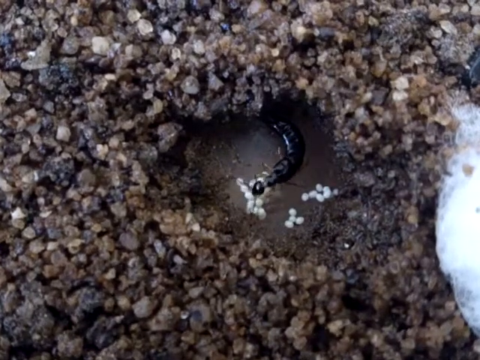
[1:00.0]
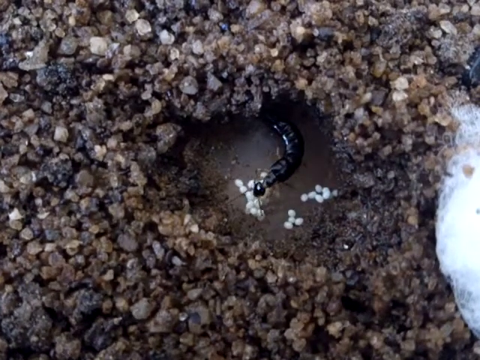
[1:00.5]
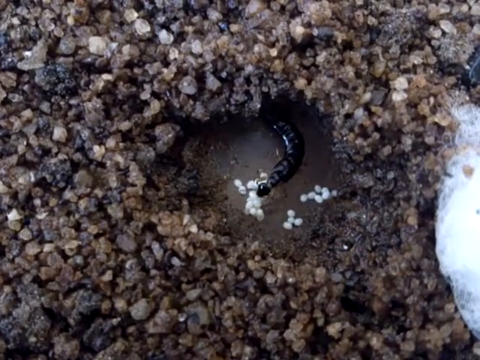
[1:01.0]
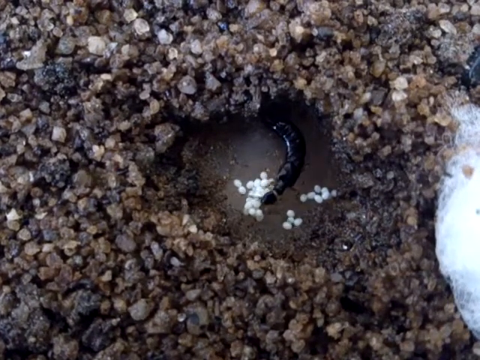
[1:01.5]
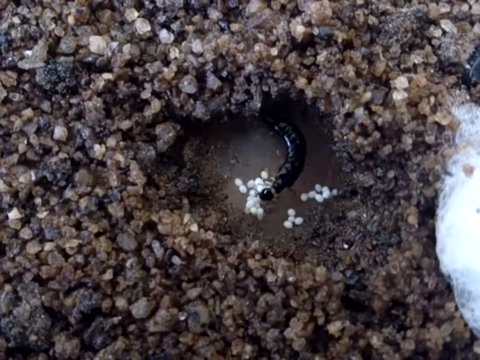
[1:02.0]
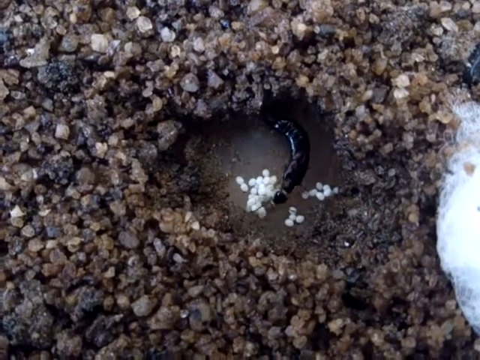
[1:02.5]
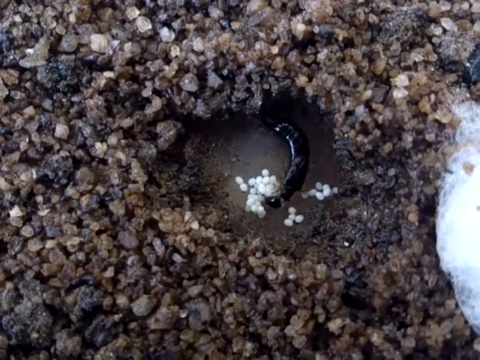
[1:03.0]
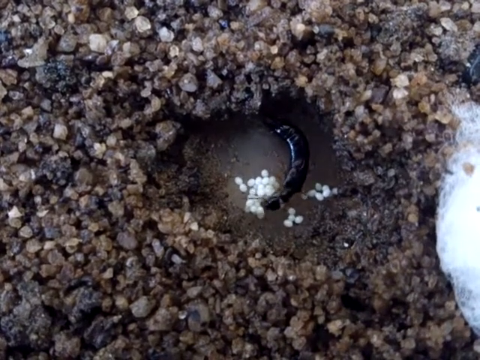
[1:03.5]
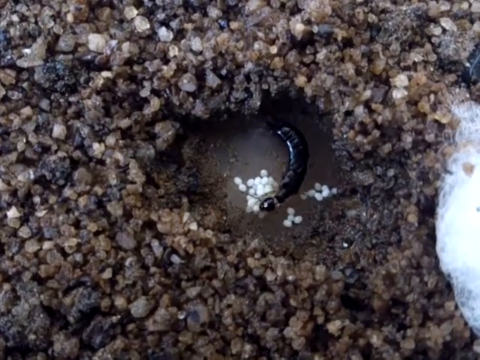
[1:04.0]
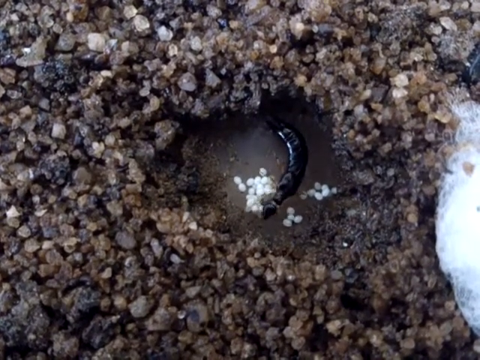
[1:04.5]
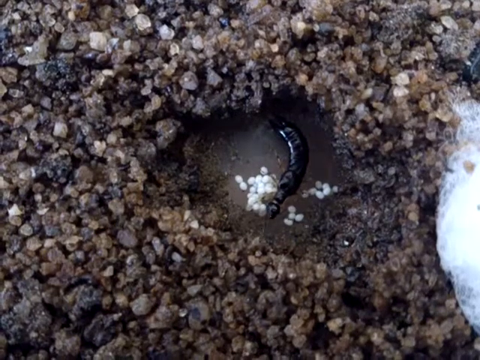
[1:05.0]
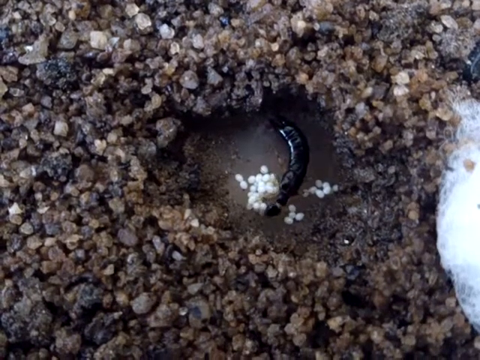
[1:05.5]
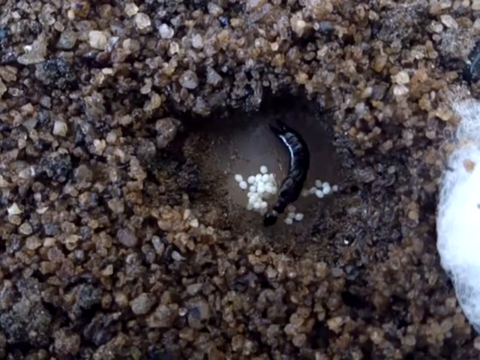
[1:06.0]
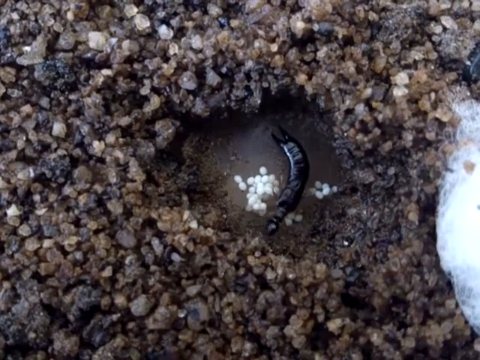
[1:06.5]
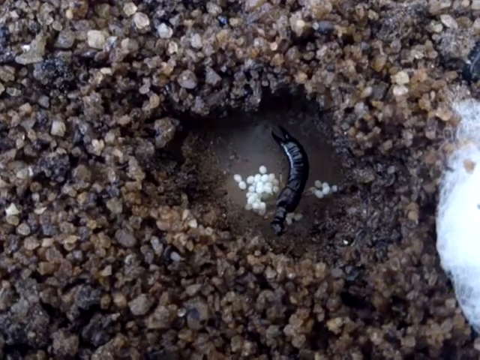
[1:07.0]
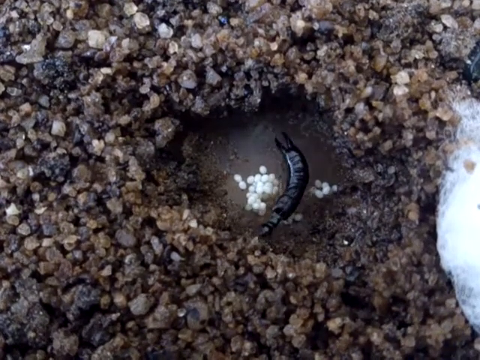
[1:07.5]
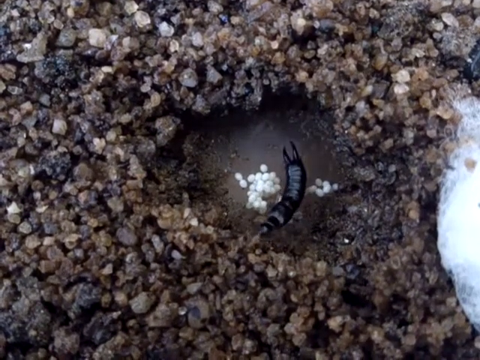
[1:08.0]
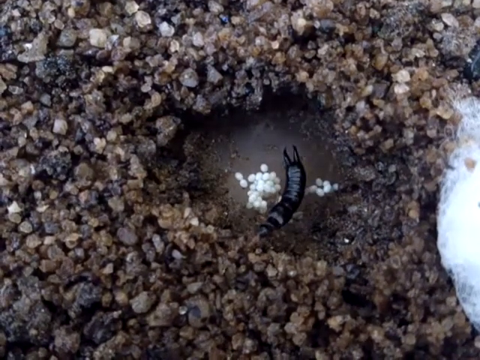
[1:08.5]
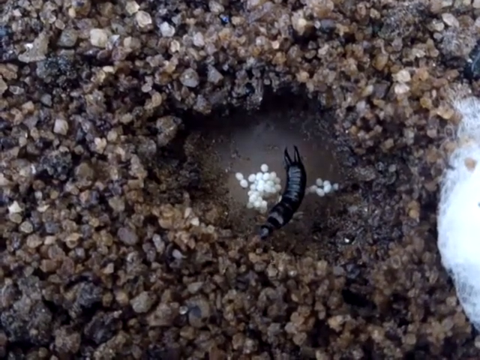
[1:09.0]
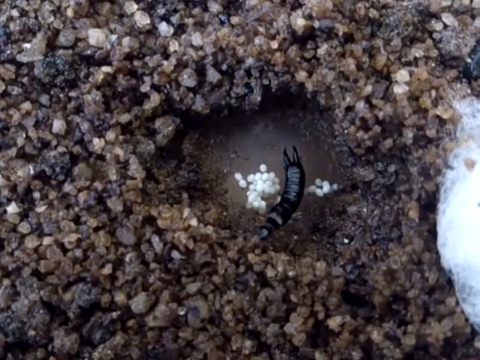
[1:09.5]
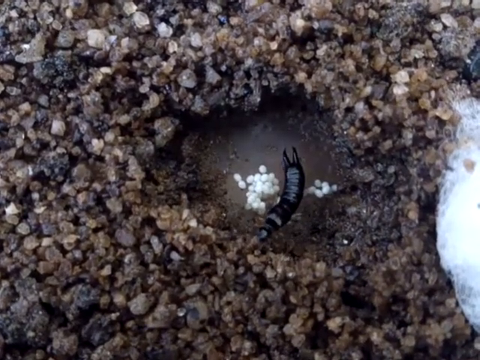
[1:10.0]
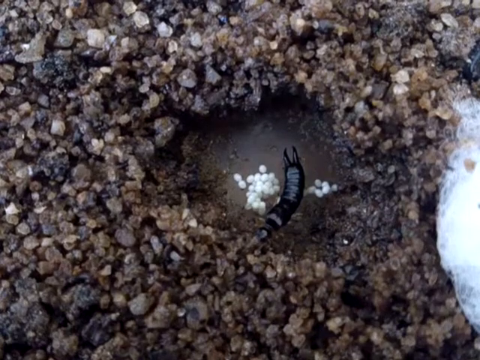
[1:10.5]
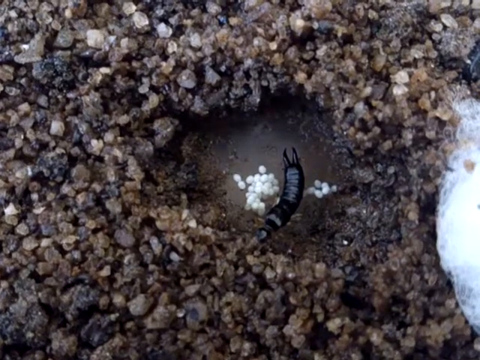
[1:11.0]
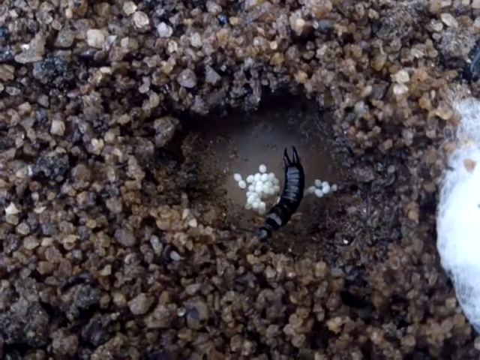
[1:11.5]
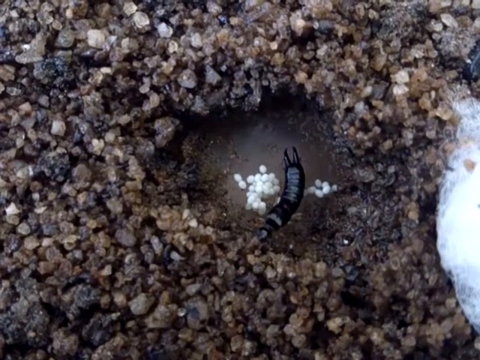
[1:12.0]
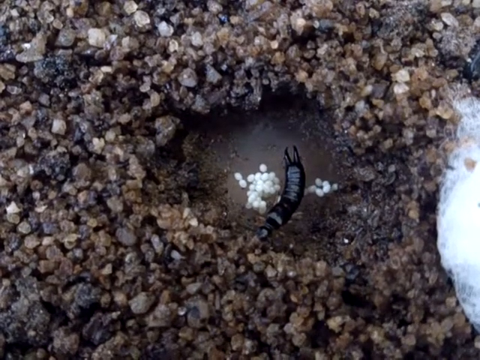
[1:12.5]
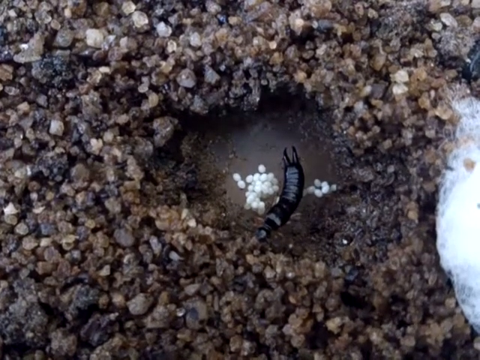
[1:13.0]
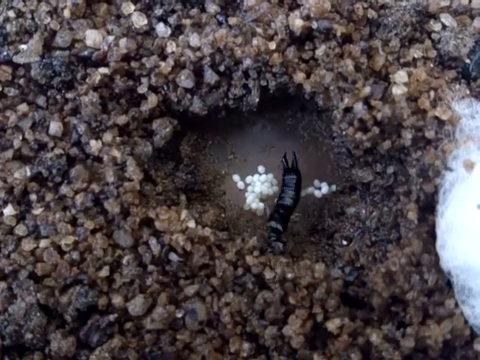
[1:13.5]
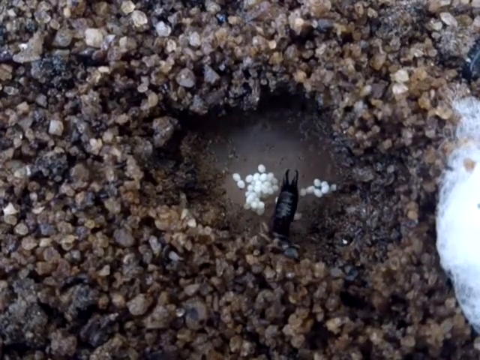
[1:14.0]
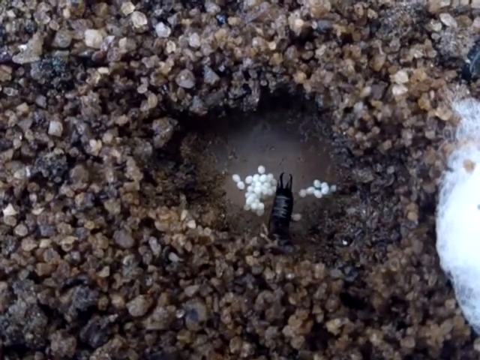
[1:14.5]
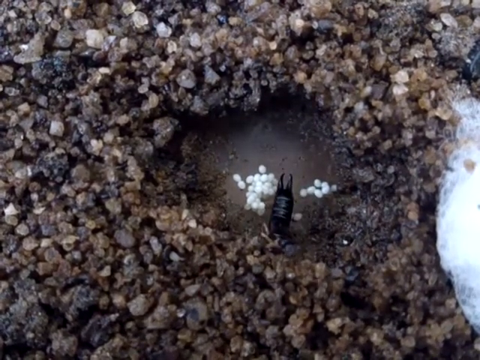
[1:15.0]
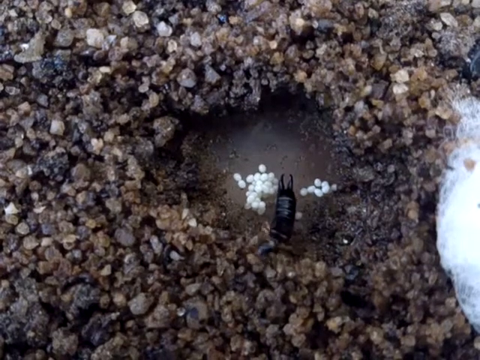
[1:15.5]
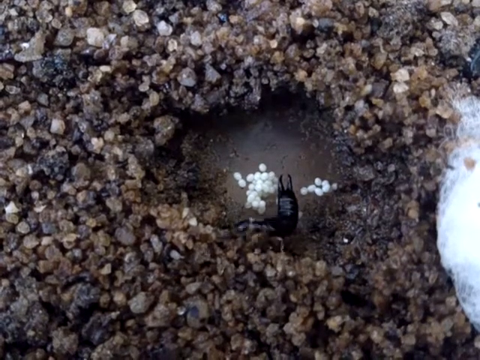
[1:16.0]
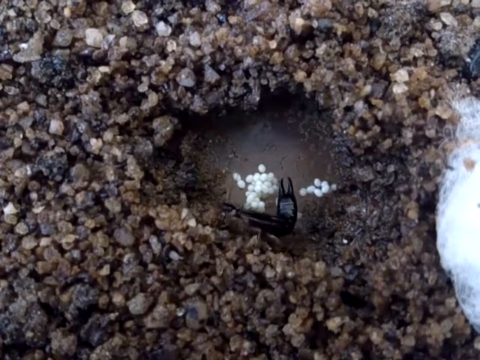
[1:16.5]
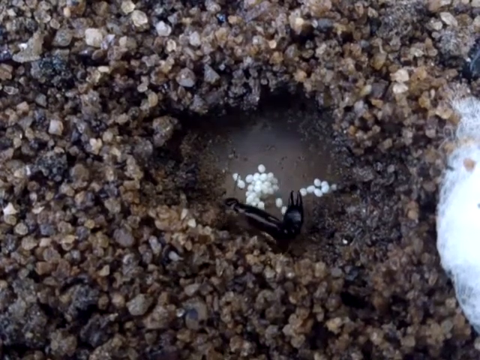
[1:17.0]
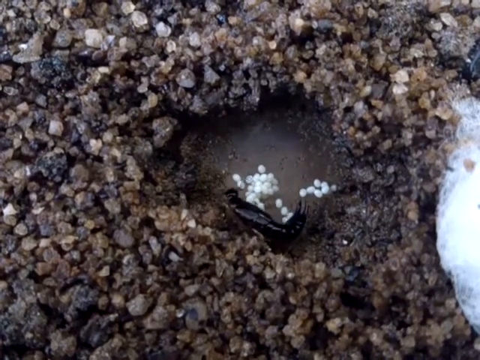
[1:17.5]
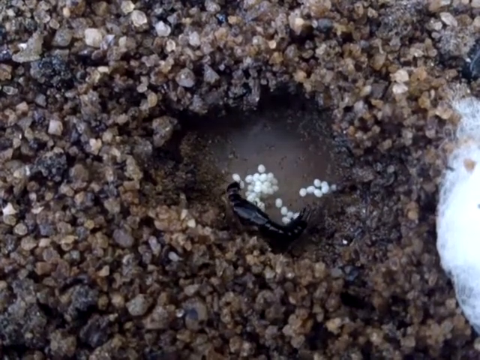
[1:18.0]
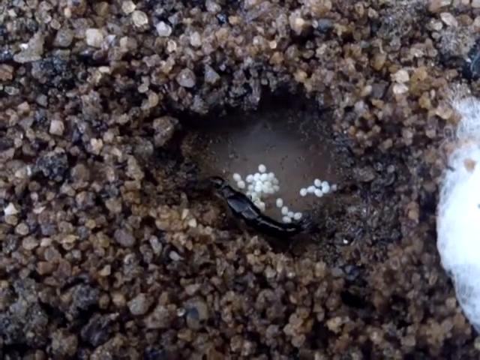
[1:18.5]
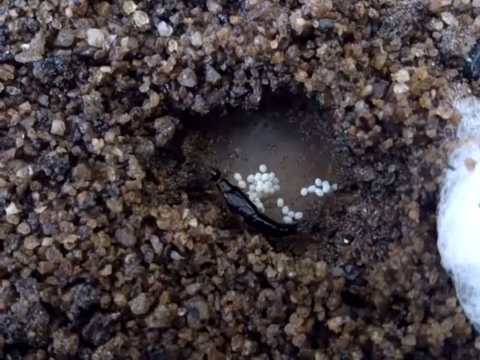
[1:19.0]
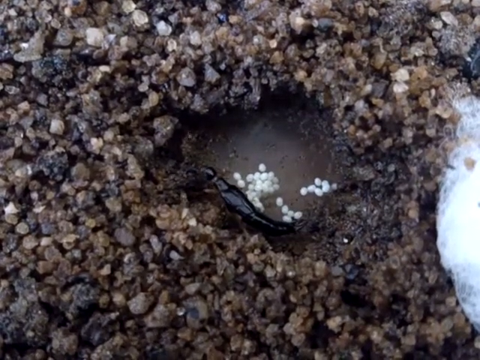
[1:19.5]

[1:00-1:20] A close-up shows very gravelly, wet ground with a small indentation in the center of the screen, probably no more than a couple of inches across, with water in it. In the water are small white balls, apparently eggs or larvae of some sort. A large, very shiny black insect, as long as the pool is wide, has a very long black antenna. At the beginning the antenna moves around, almost as if the insect is testing the edges of the little pool. As the video progresses, the insect moves around those edges as if checking the boundaries of the pool where the eggs or larvae are floating.